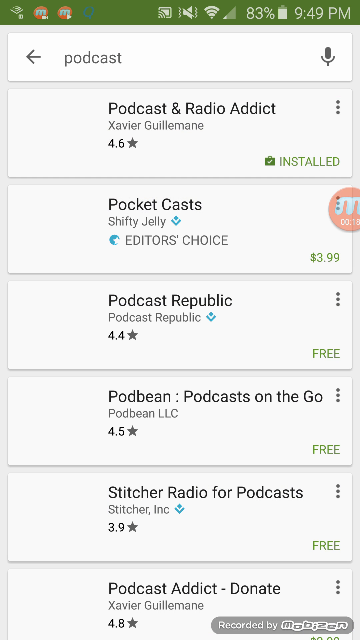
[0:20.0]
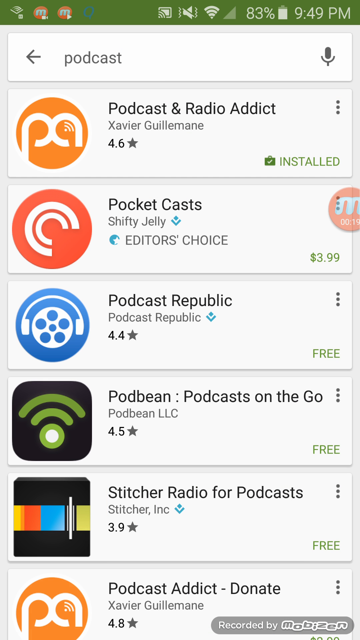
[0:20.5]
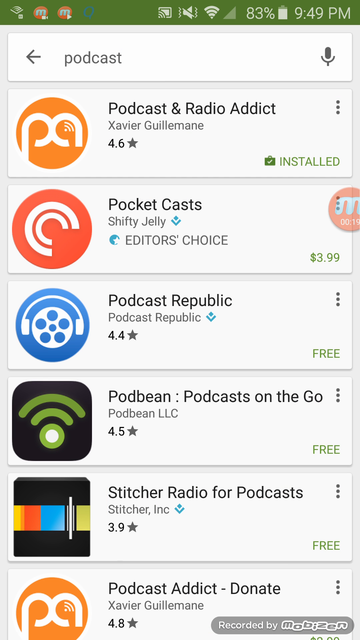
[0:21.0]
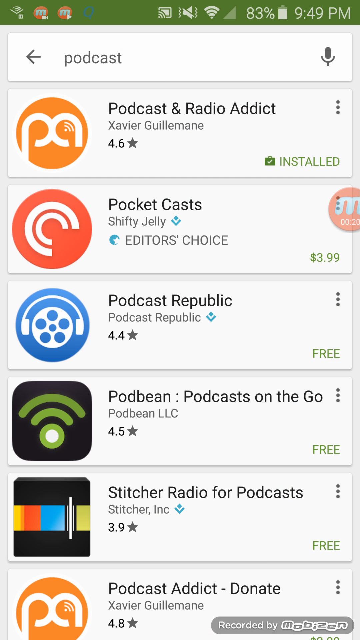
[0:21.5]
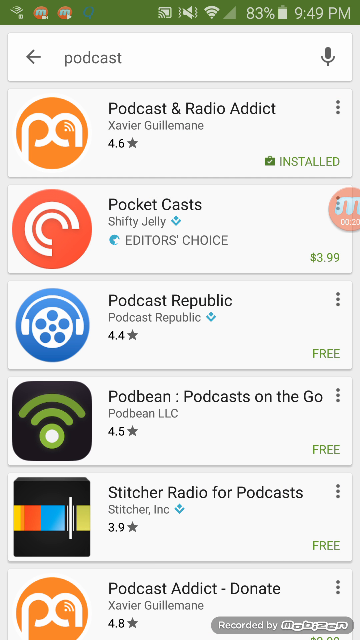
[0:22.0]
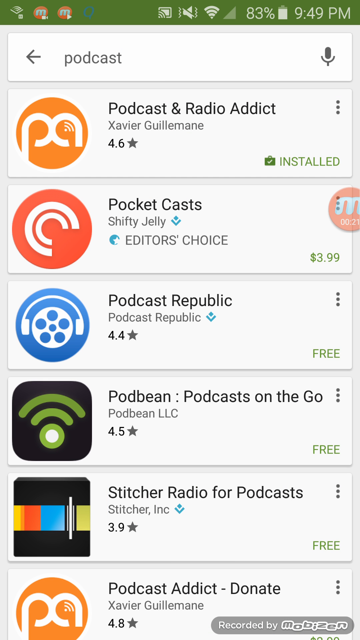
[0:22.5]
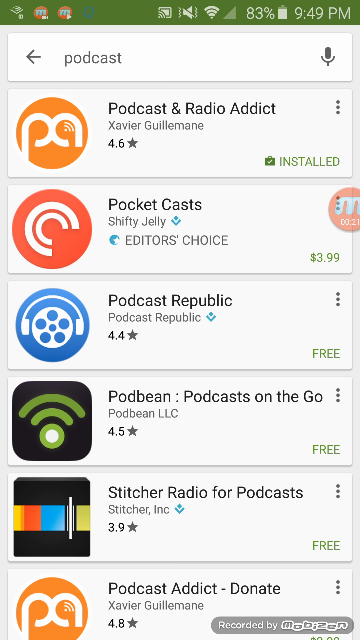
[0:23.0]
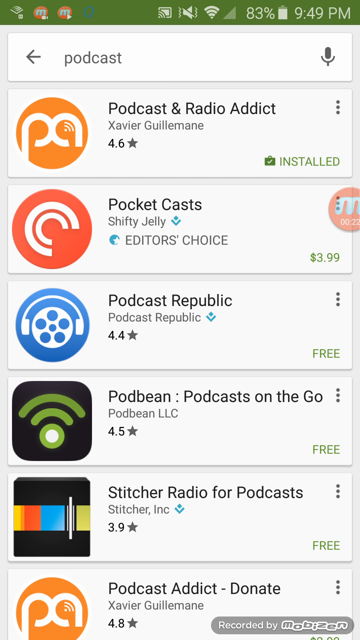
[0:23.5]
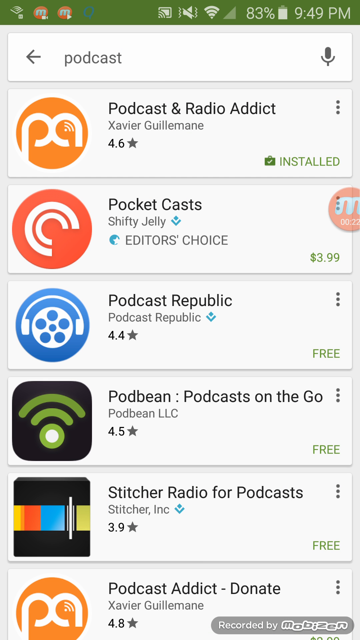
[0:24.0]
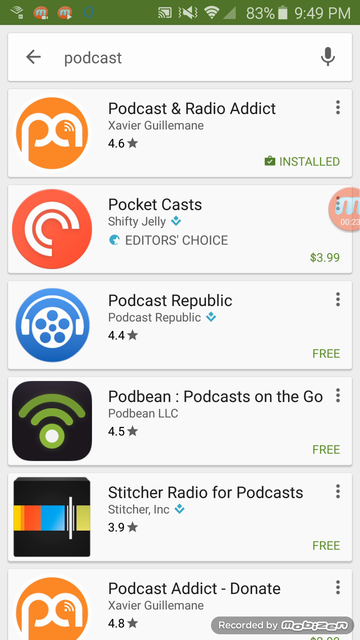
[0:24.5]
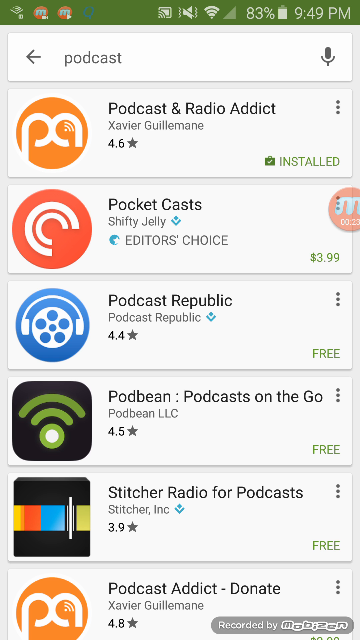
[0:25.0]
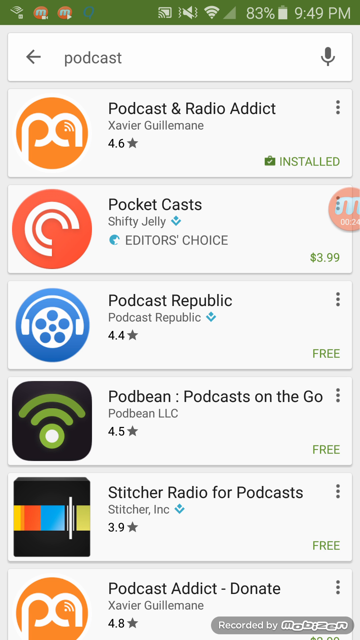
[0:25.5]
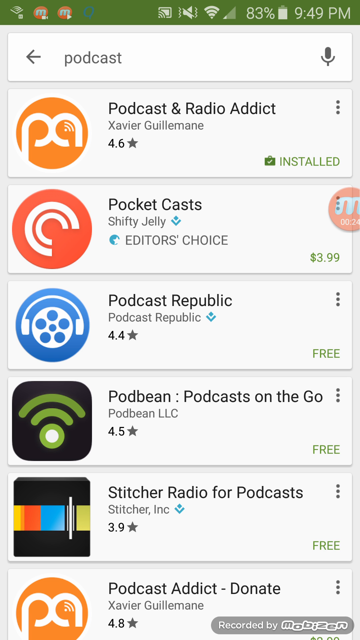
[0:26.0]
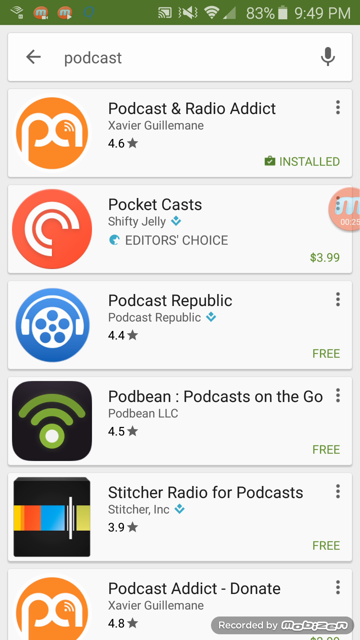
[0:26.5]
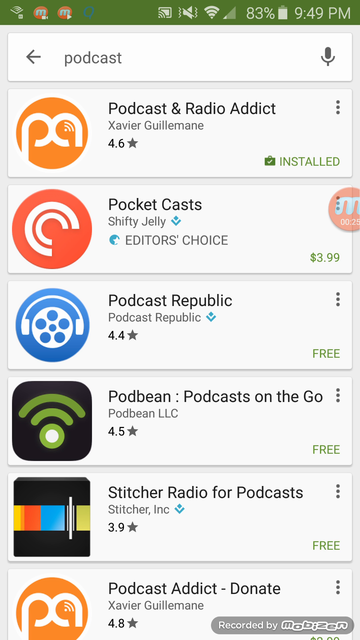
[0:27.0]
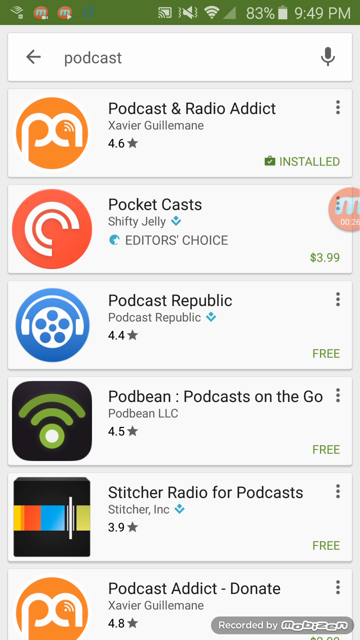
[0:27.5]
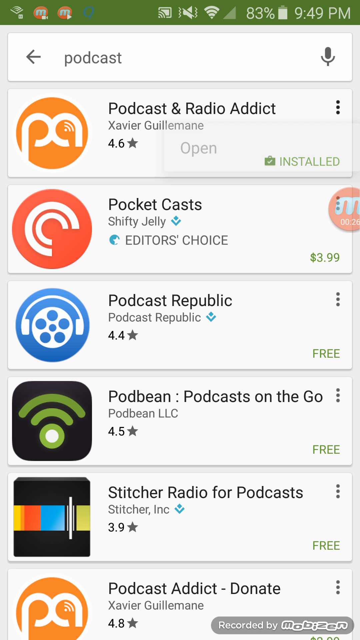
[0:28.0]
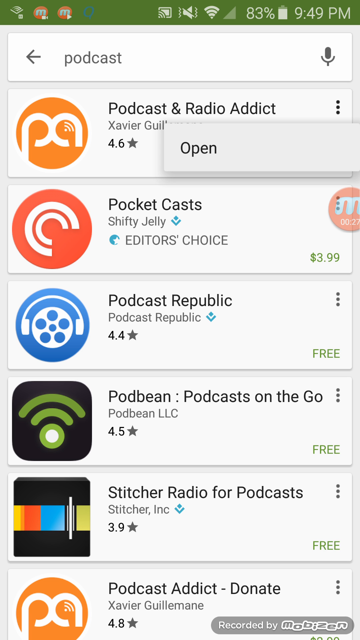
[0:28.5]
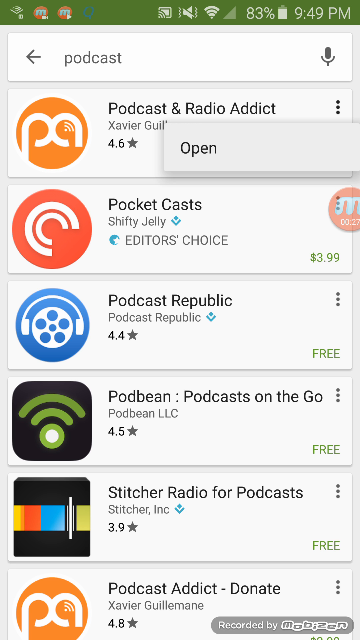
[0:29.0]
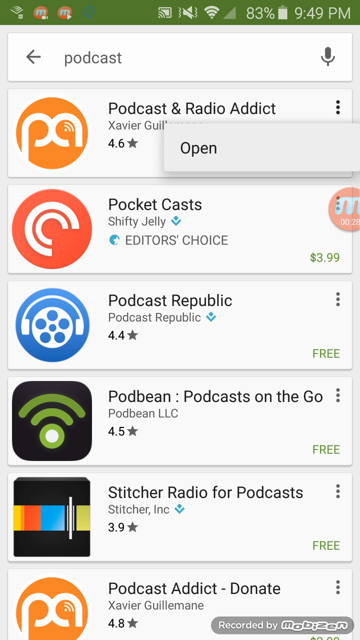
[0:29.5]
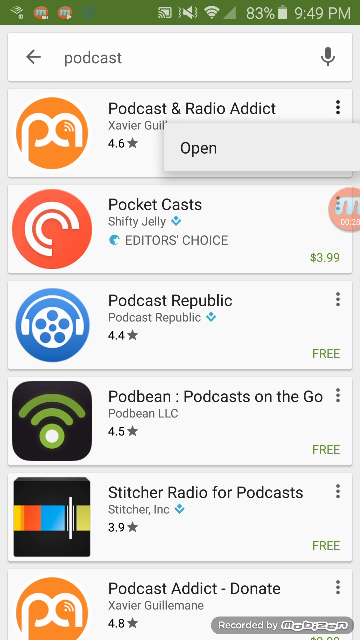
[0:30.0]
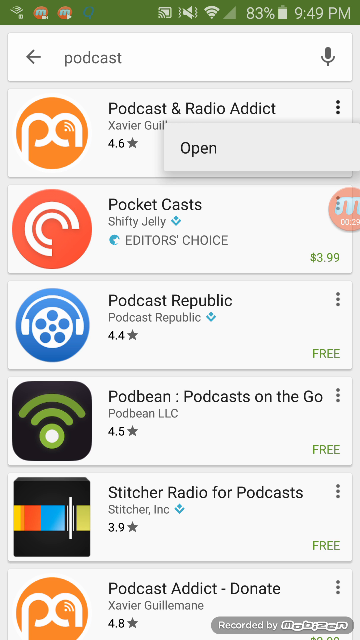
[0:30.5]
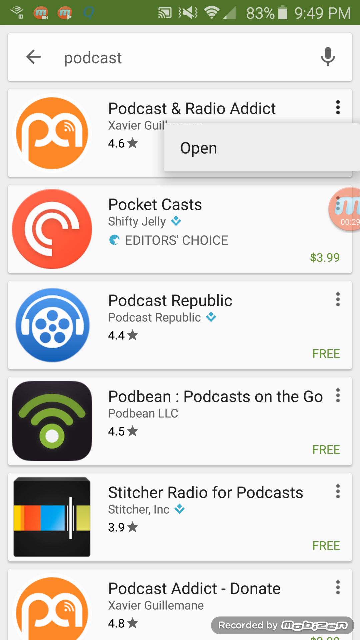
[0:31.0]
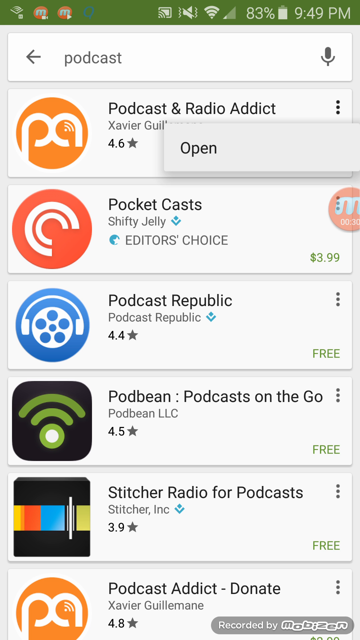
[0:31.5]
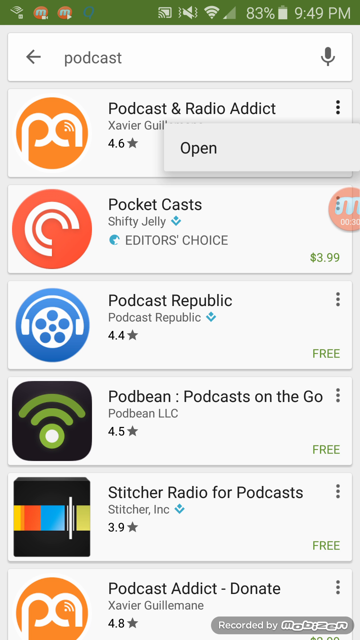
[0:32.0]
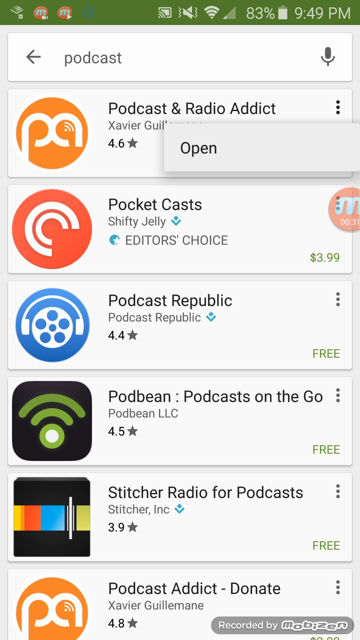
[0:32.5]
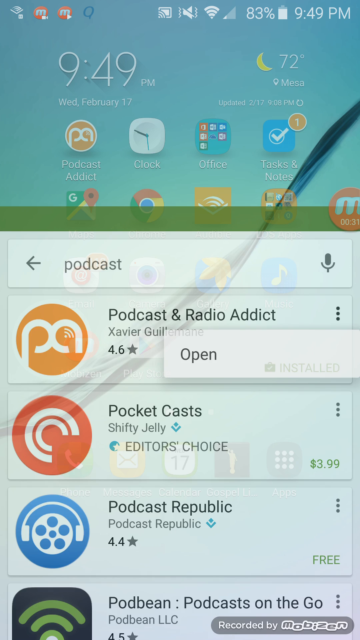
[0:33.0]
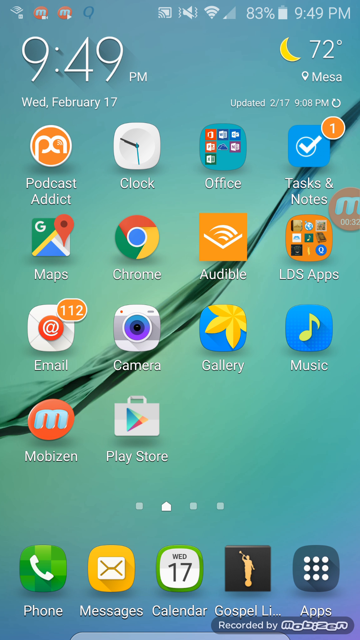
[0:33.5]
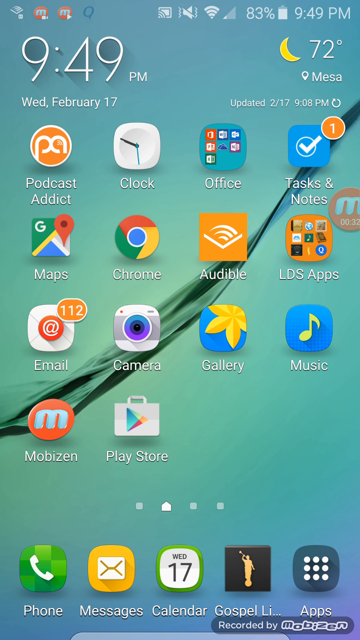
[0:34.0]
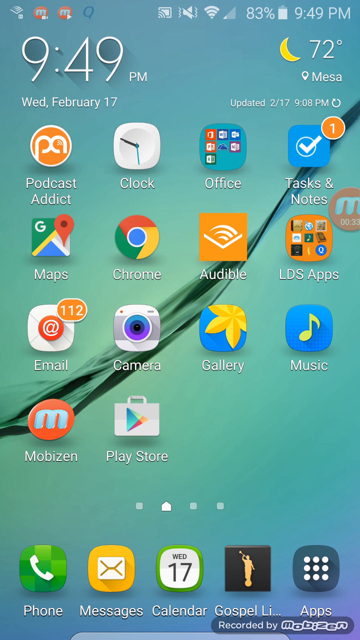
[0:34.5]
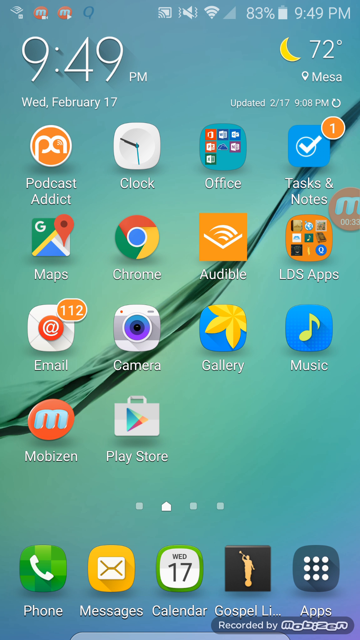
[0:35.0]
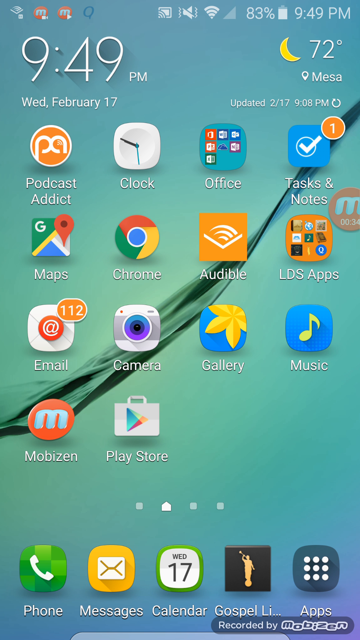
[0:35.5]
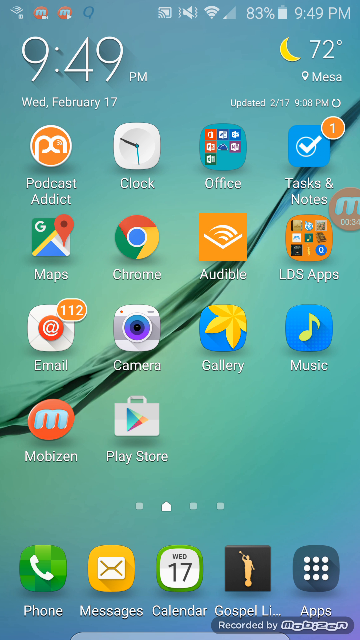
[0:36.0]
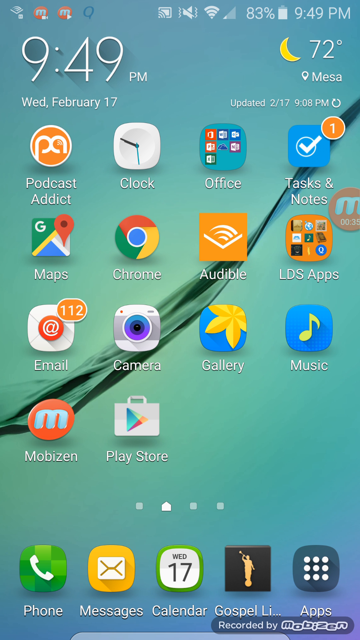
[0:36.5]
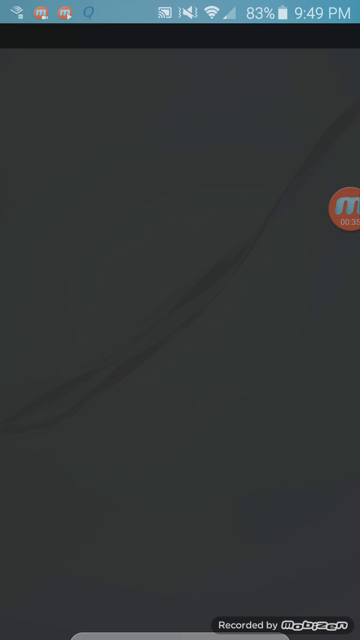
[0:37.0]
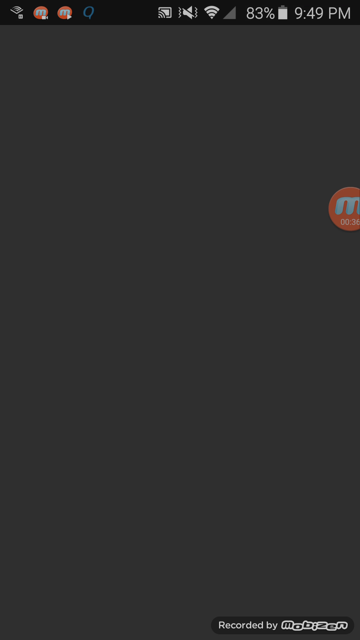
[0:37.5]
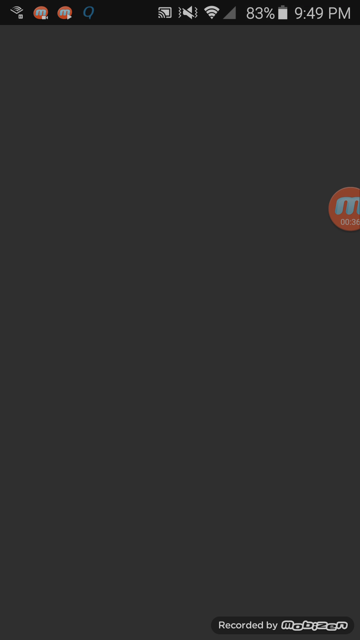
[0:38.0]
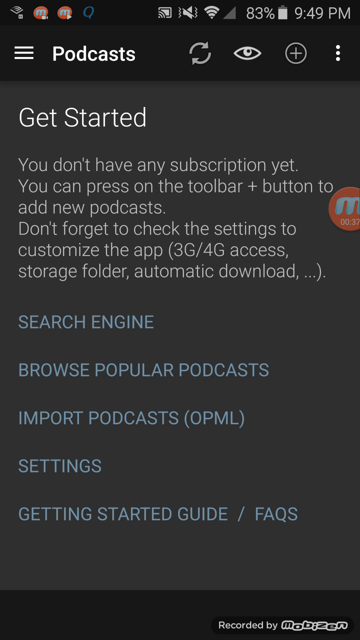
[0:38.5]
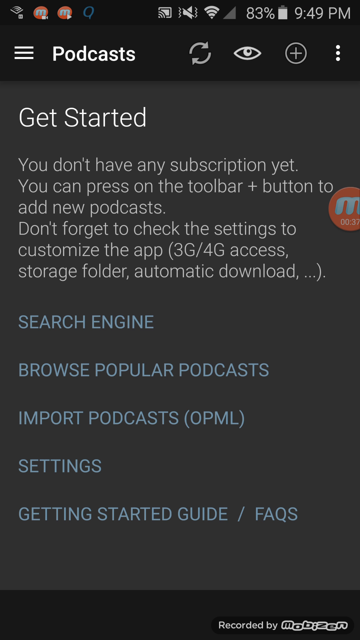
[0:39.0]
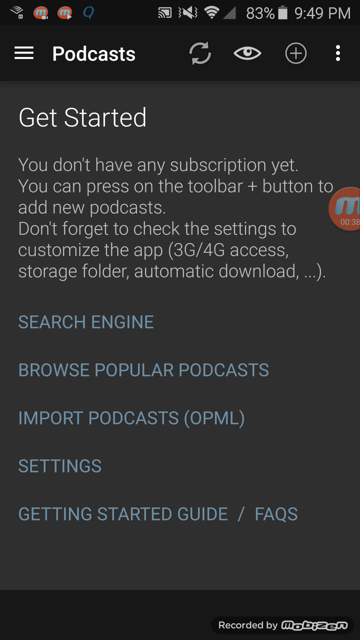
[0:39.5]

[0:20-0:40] The Google Play Store shows search results for "podcast": podcast and radio addict, pocket casts, podcast republic, pod bean, podcasts on the go, stitcher radio for podcasts, and, as the last result, podcast addict's donate version. Each result has a rating underneath it. The podcast and radio addict app is marked as already installed on the device and has a 4.6 star rating. Pocket casts is marked as editor's choice and is a paid app costing $3.99. Below it, podcast republic is listed as free, with a 4.4 star rating.